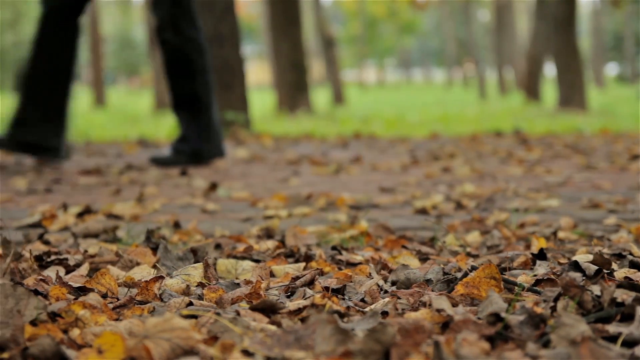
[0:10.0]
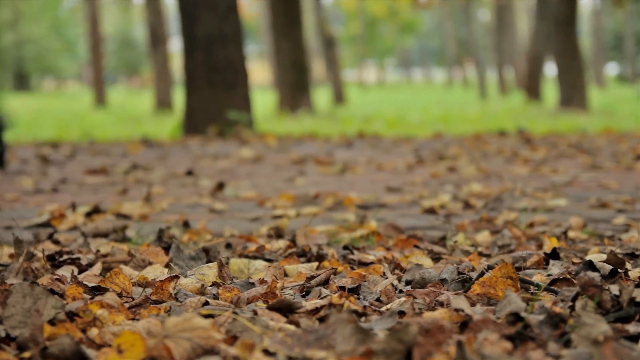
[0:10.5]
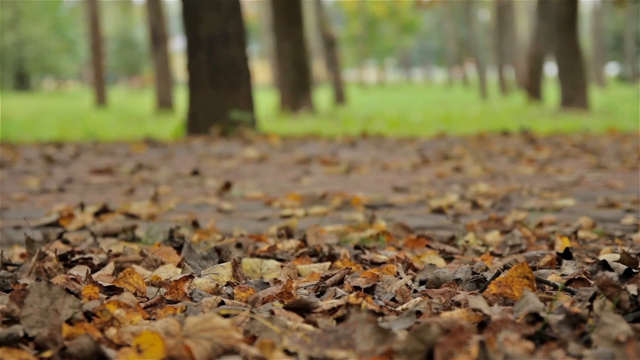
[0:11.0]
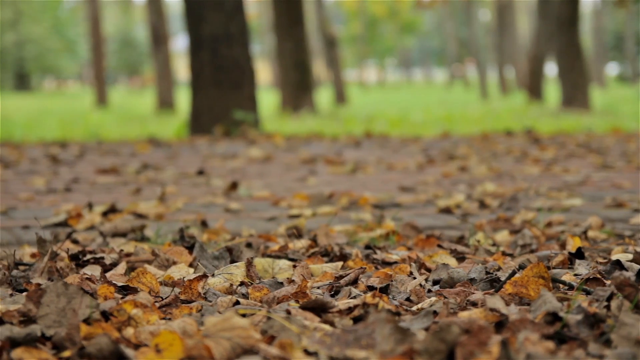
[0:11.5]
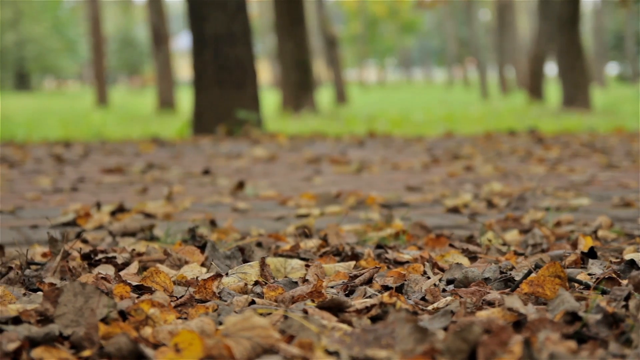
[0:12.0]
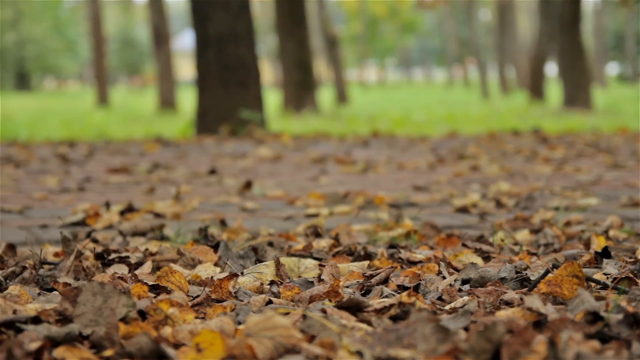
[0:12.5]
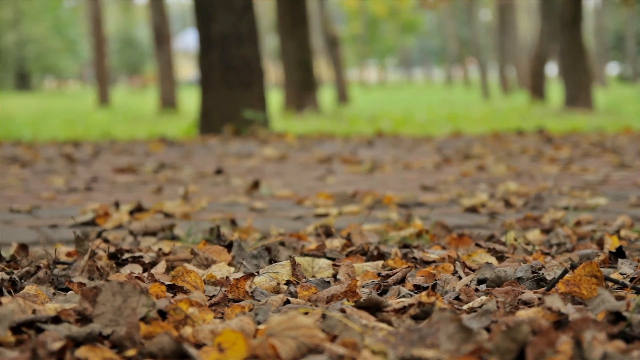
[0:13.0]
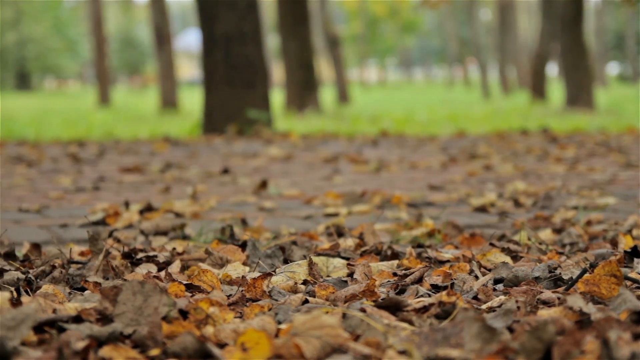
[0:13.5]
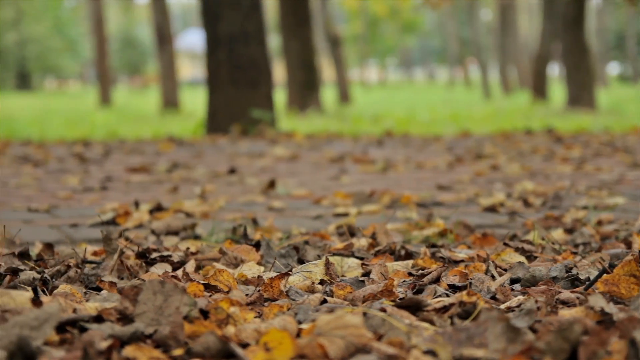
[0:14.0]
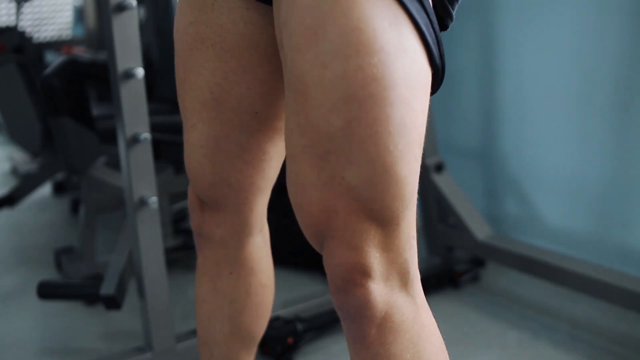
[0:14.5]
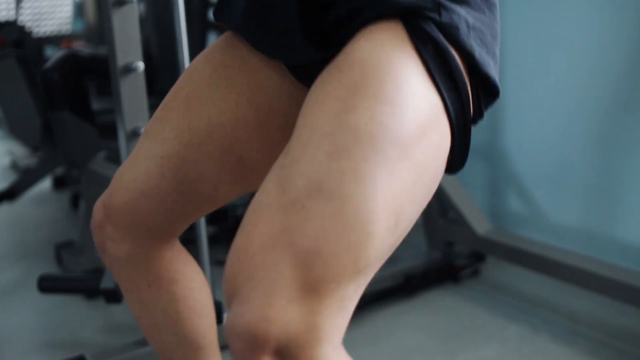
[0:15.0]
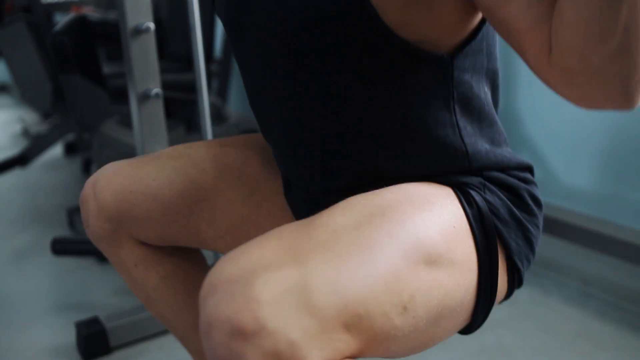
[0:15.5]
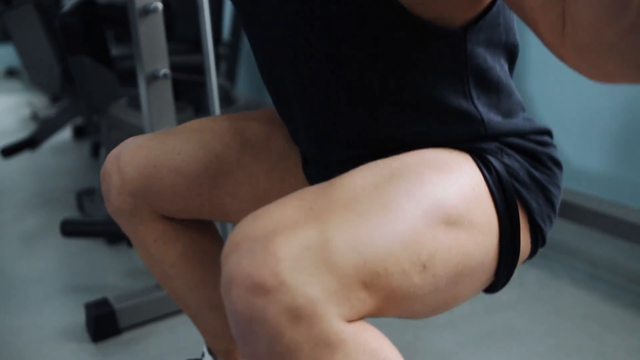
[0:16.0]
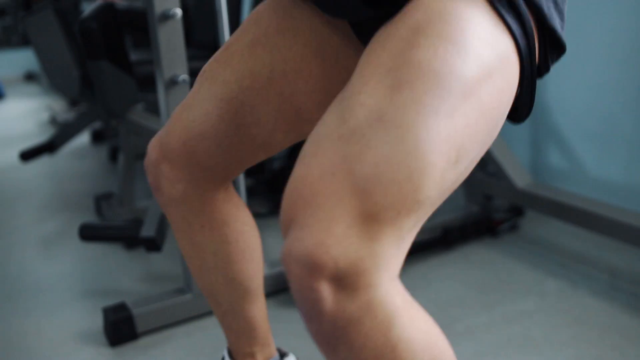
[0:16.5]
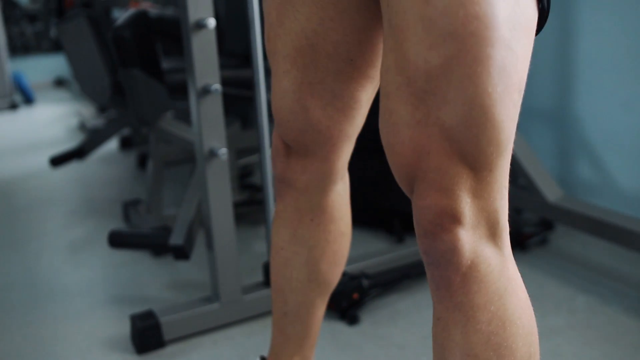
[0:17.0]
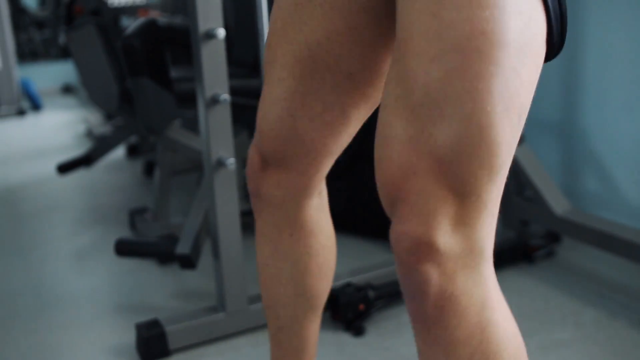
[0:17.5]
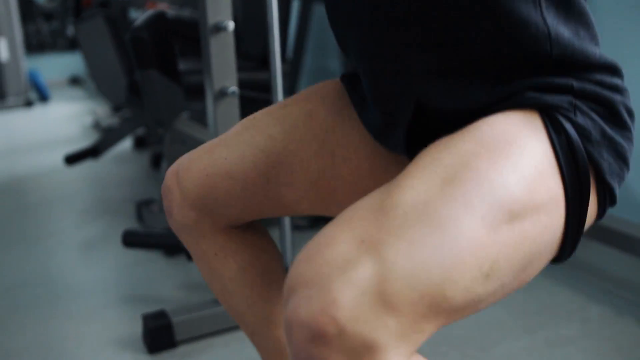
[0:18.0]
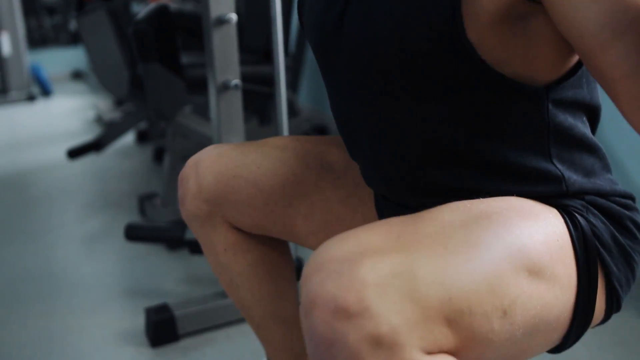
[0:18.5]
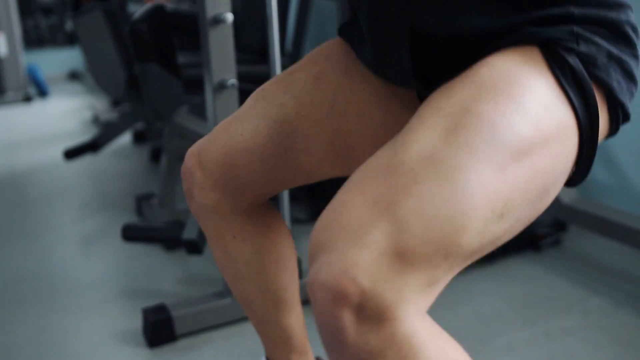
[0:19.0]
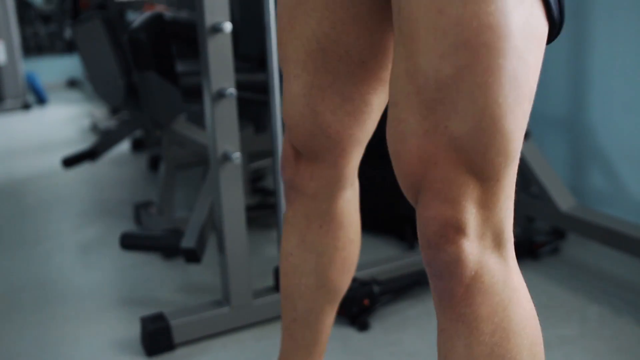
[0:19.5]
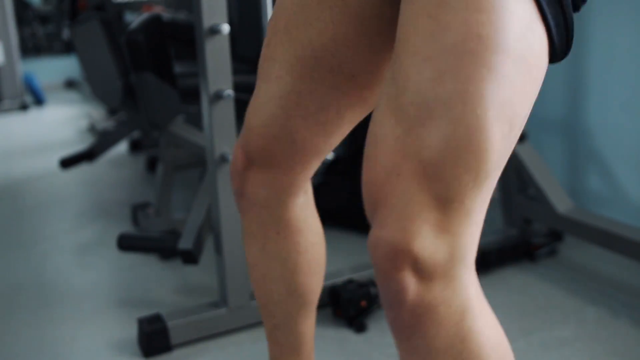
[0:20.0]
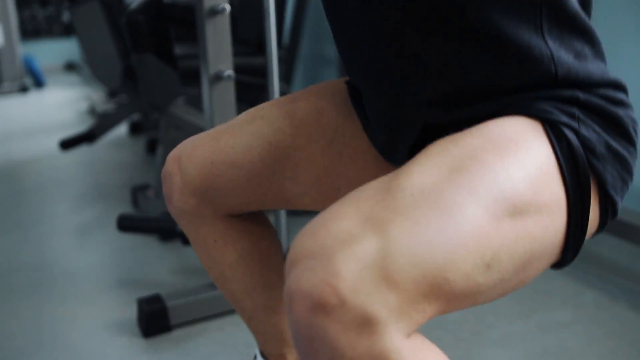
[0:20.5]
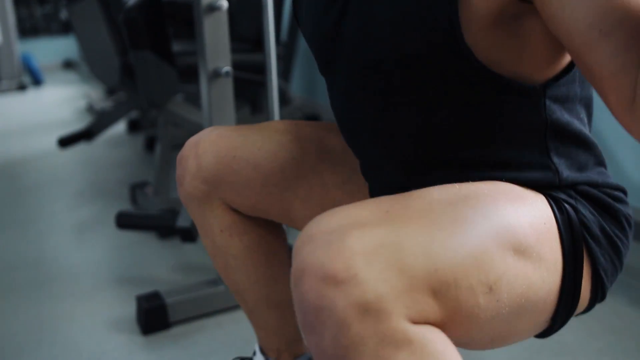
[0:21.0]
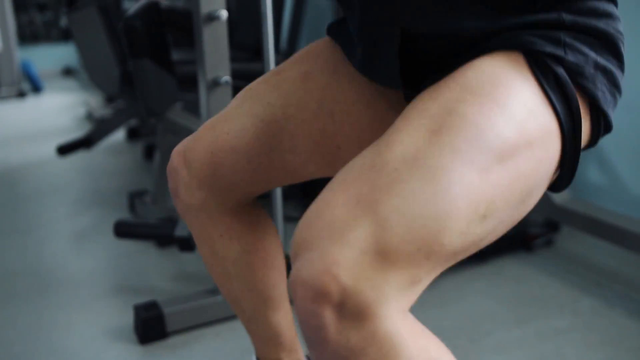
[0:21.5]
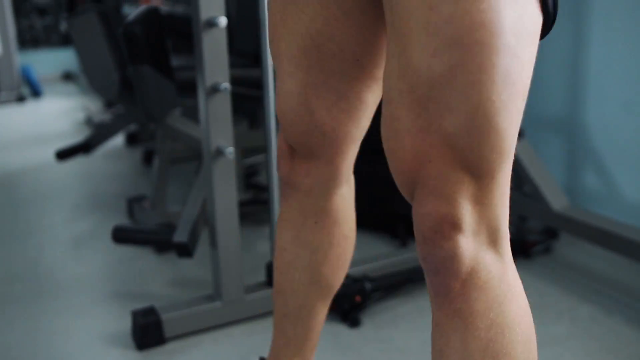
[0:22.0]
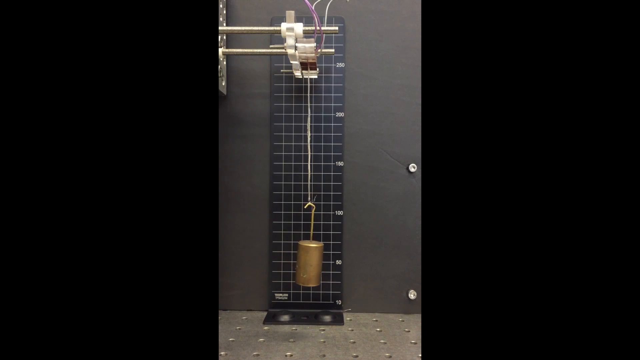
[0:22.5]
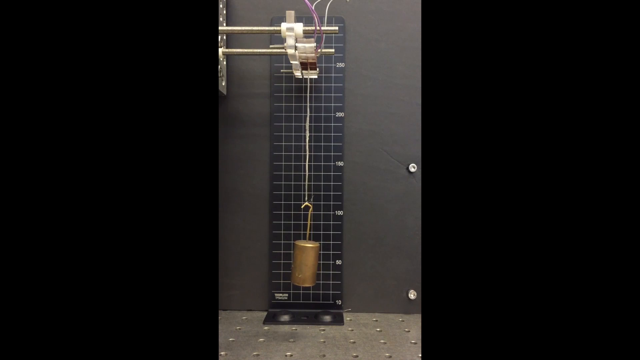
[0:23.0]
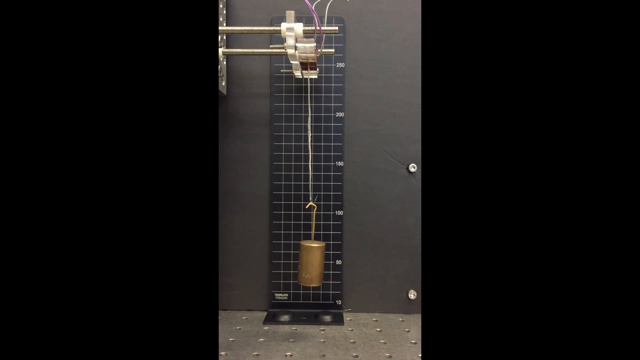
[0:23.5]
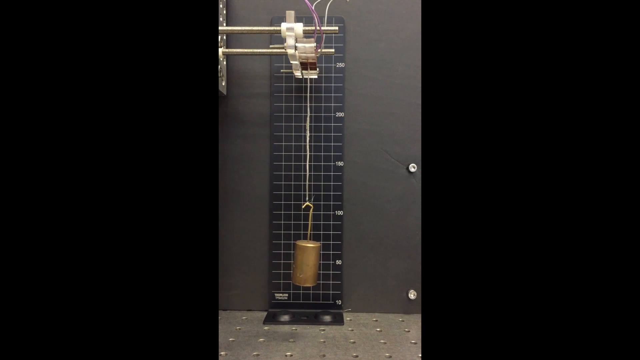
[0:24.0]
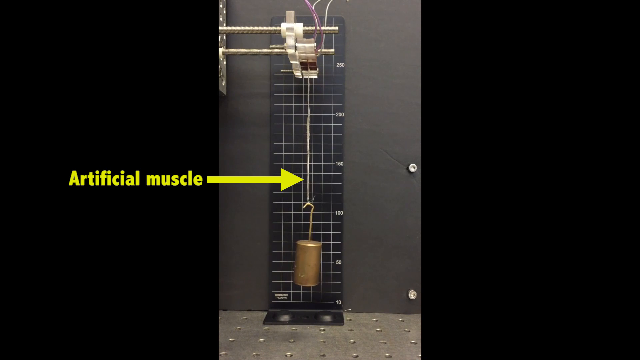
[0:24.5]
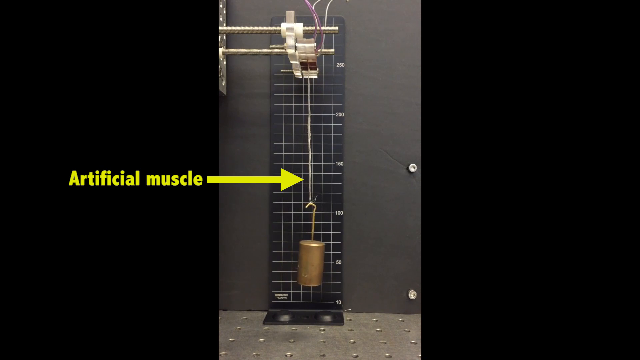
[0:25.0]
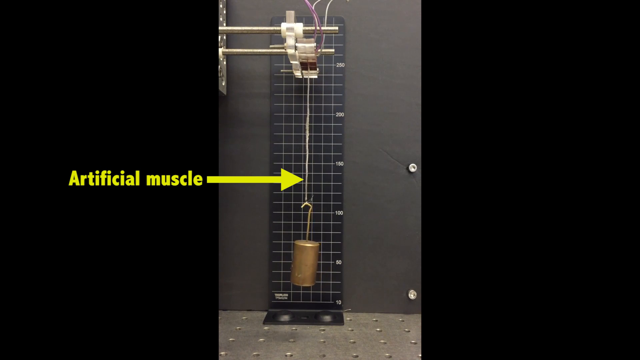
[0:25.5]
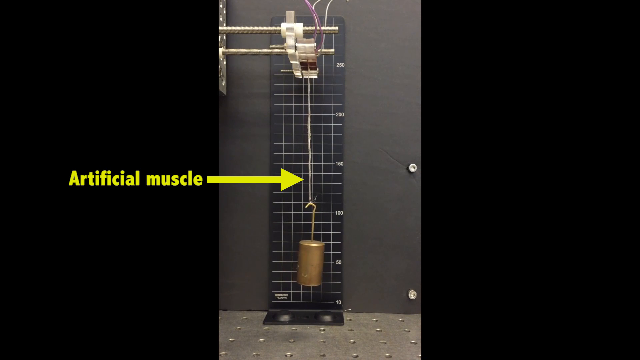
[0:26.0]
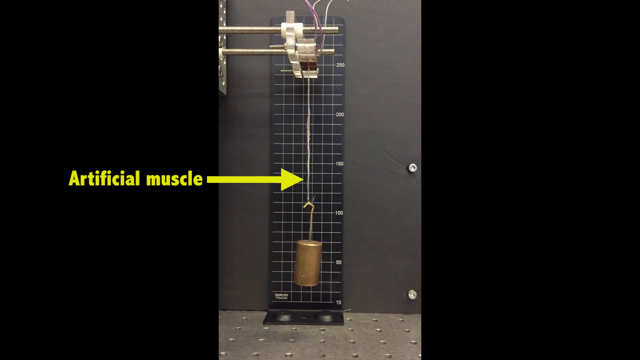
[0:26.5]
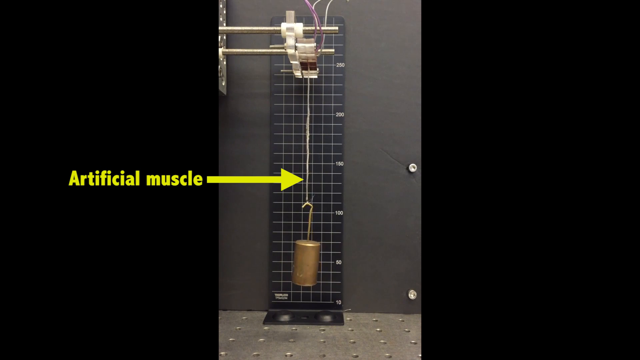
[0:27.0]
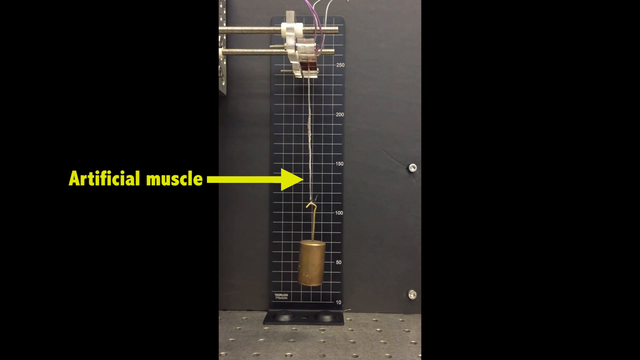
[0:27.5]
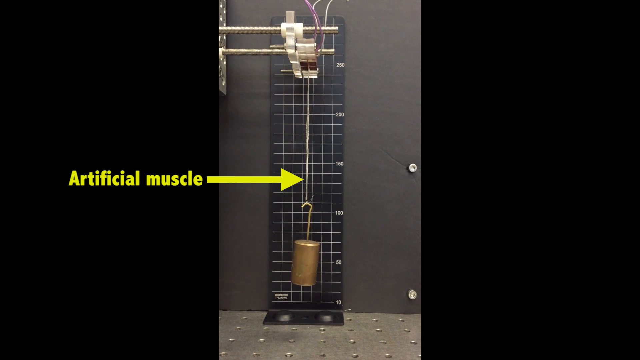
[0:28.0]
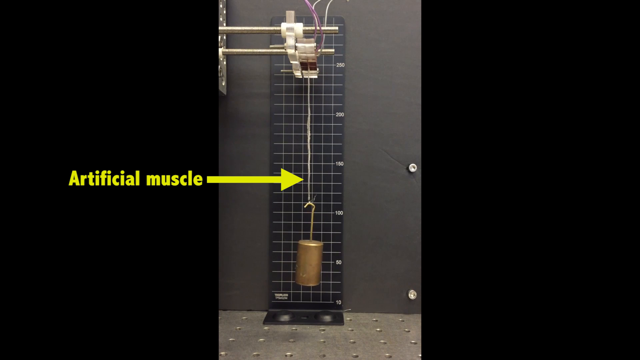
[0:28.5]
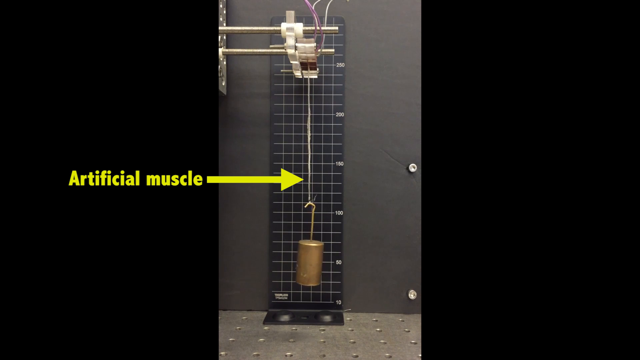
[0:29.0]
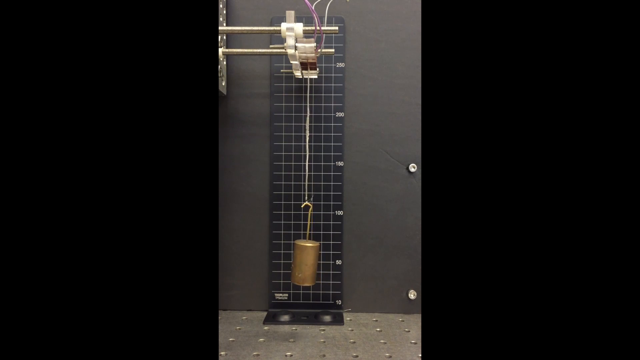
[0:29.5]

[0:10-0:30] A person pushes a stroller across the leaves. Only their hips and below are visible; they wear long black pants that flare at the bottom and black shoes. The stroller is all black with four wheels. The scene switches to a person in a gym doing squats, apparently with a barbell over their shoulder. The squat is very deep, almost going down to the ground, and then they push back up. The person has very big muscles on the front of their thighs and looks to be Caucasian. They wear shorts, their face is not visible, and they have done three squats so far. The video then switches to some type of device with two metal bars attached to a wall. A line hangs from the metal bars with a gold weight on it. A yellow arrow pops up with the text "artificial muscle", pointing to one of the strings.